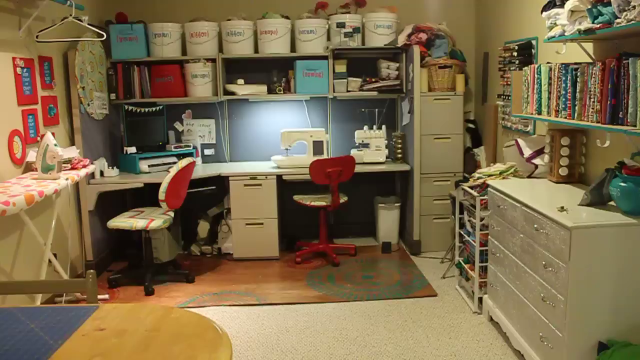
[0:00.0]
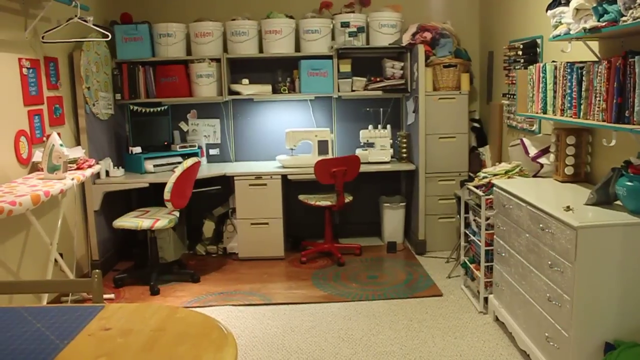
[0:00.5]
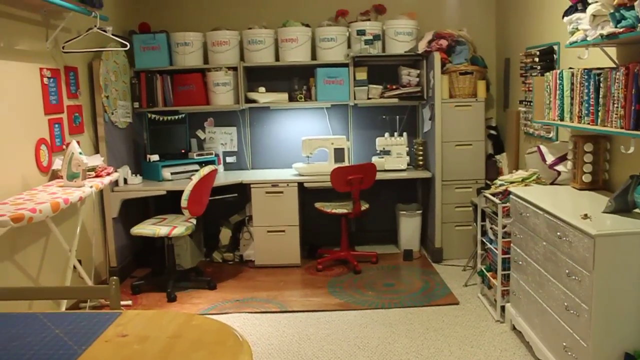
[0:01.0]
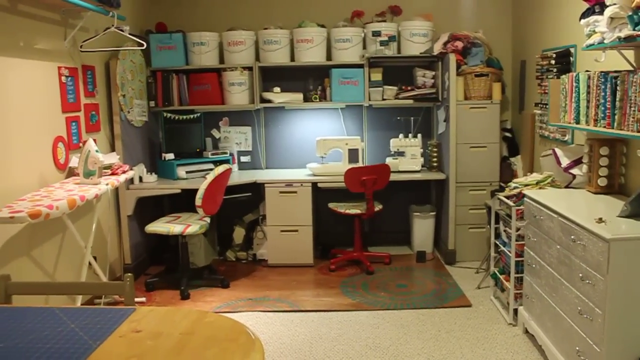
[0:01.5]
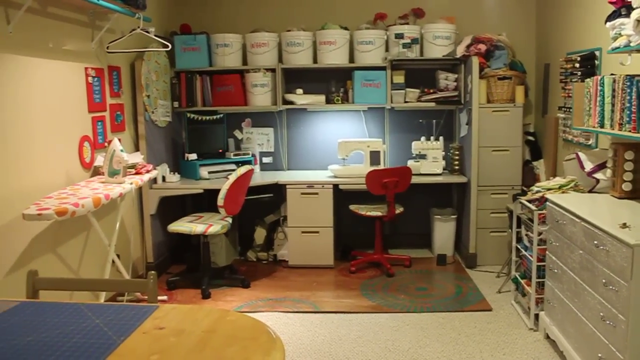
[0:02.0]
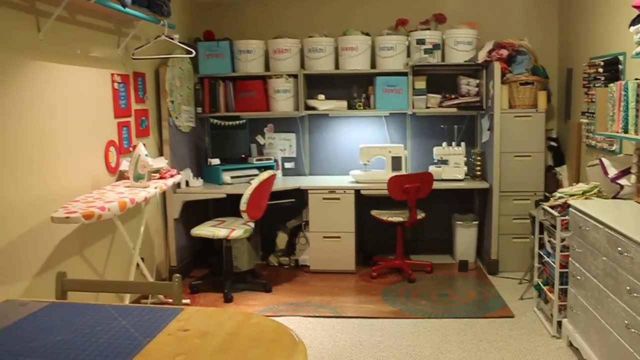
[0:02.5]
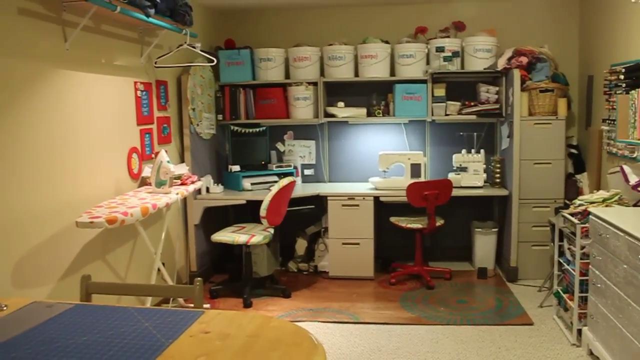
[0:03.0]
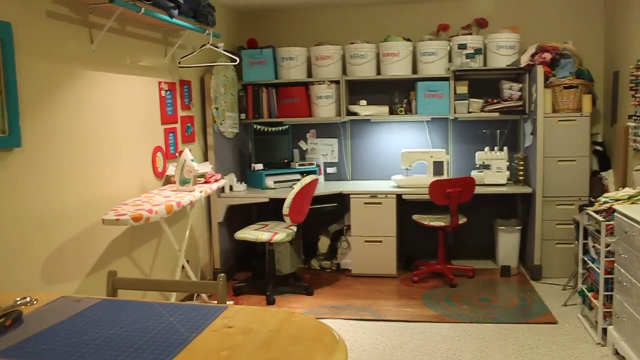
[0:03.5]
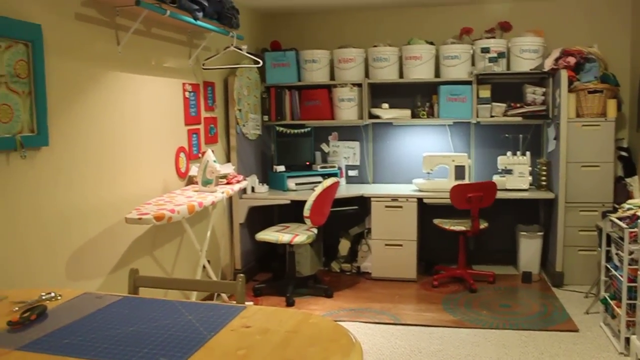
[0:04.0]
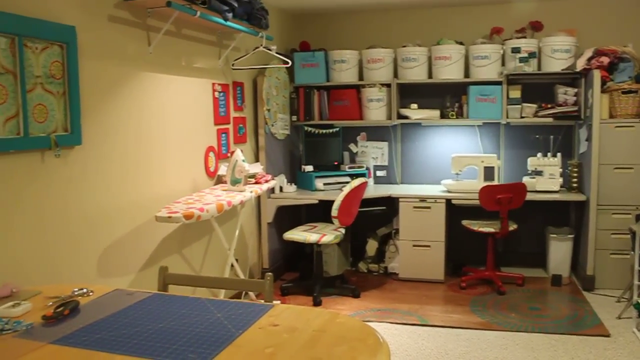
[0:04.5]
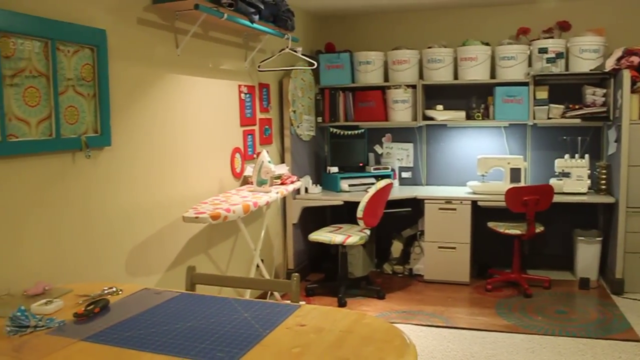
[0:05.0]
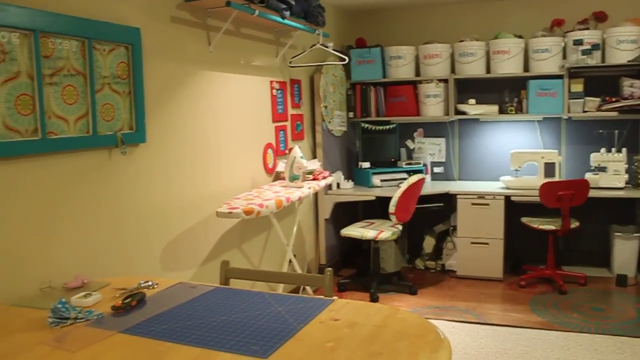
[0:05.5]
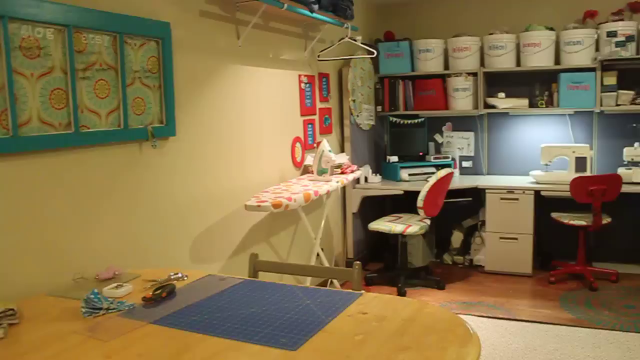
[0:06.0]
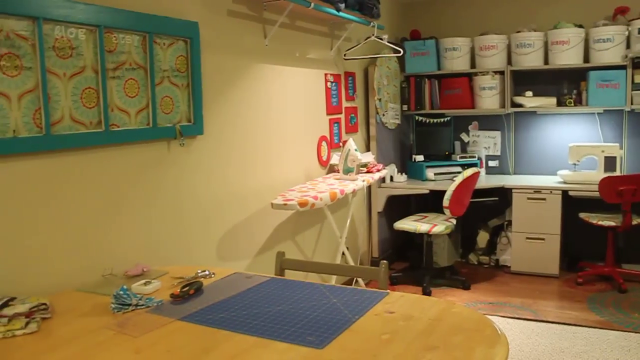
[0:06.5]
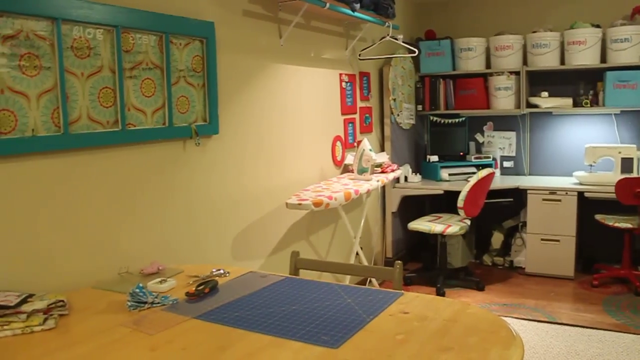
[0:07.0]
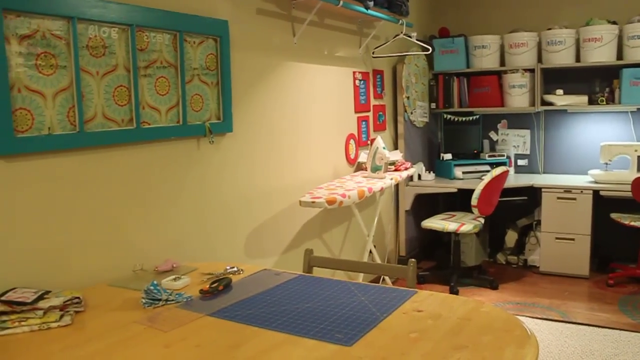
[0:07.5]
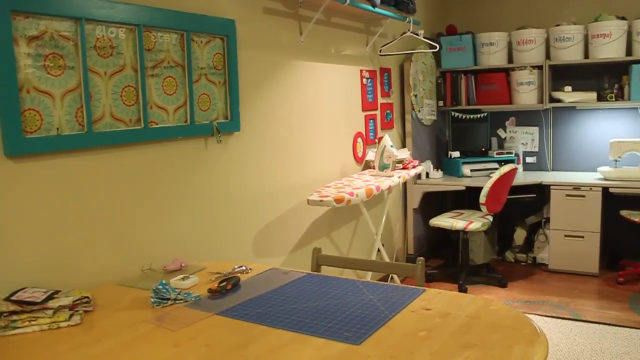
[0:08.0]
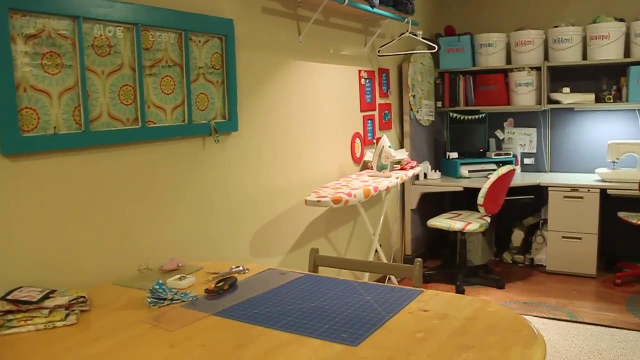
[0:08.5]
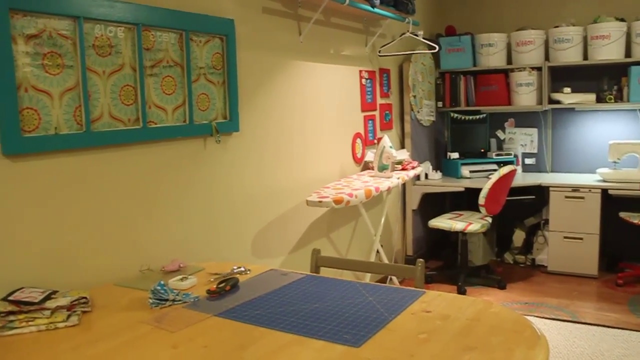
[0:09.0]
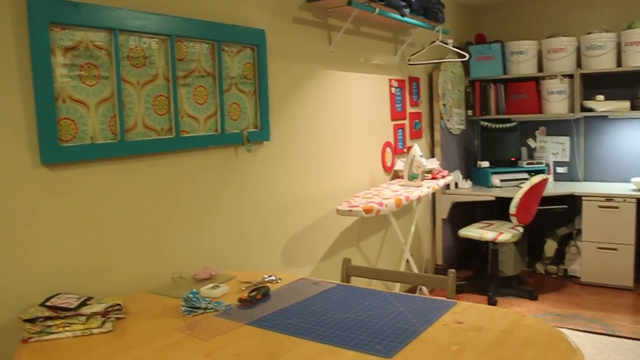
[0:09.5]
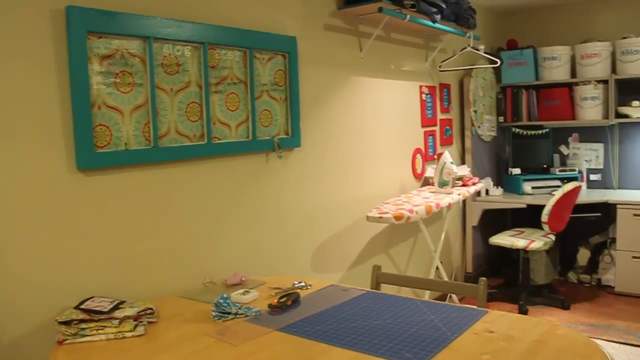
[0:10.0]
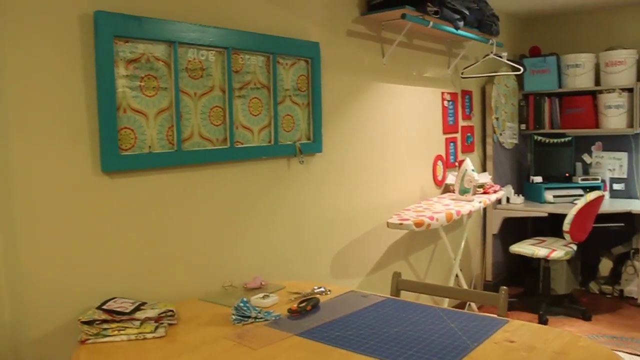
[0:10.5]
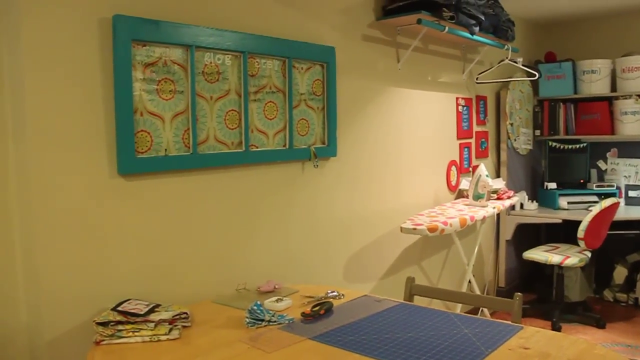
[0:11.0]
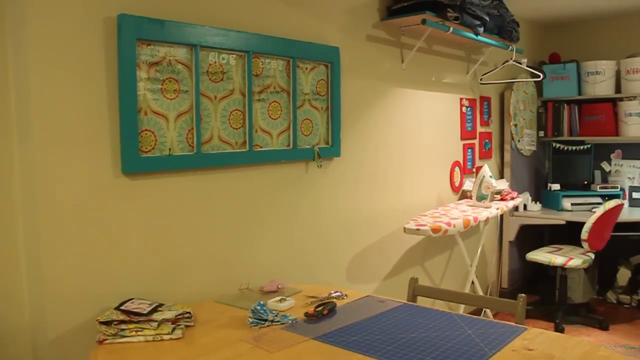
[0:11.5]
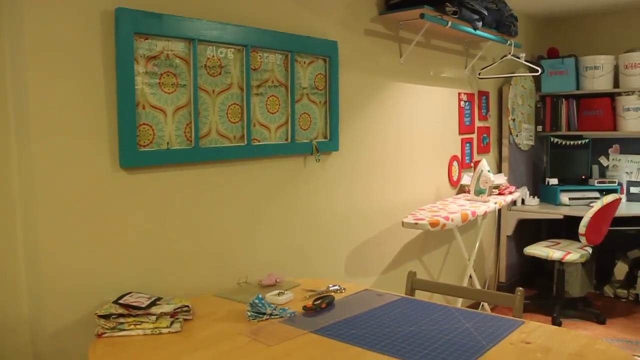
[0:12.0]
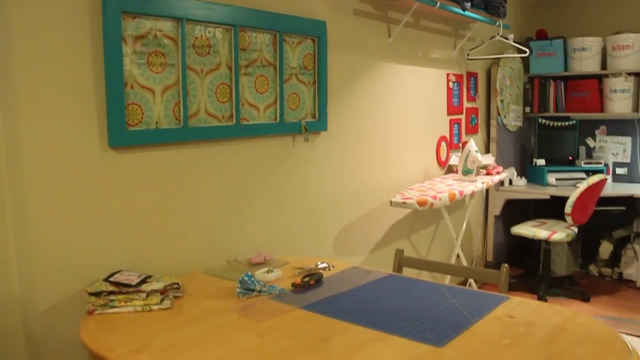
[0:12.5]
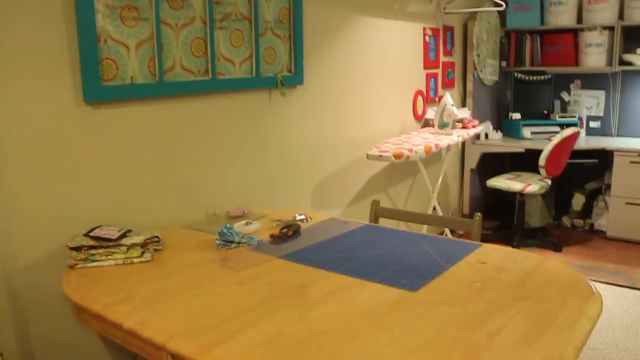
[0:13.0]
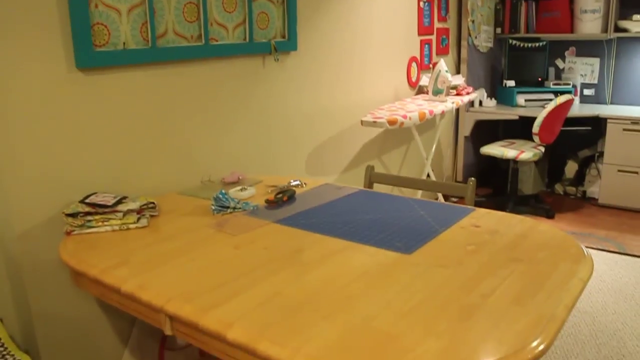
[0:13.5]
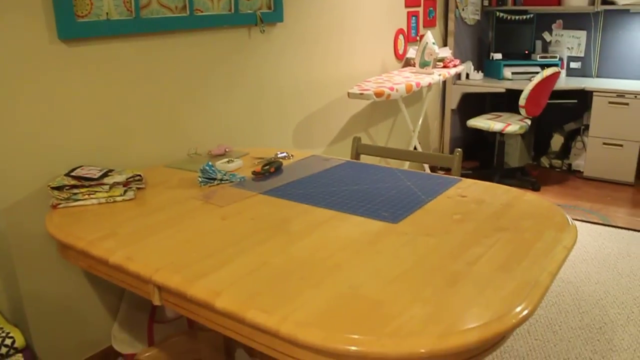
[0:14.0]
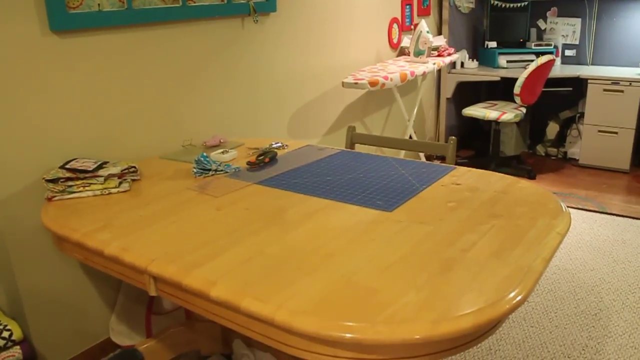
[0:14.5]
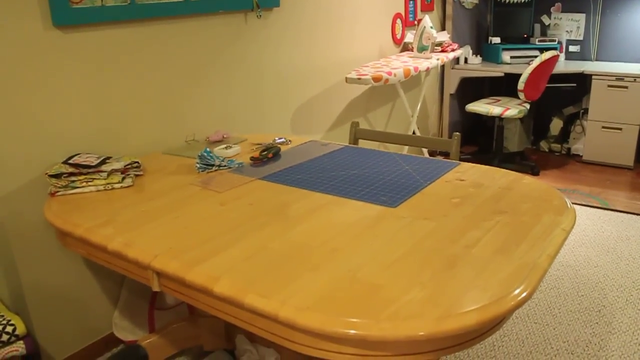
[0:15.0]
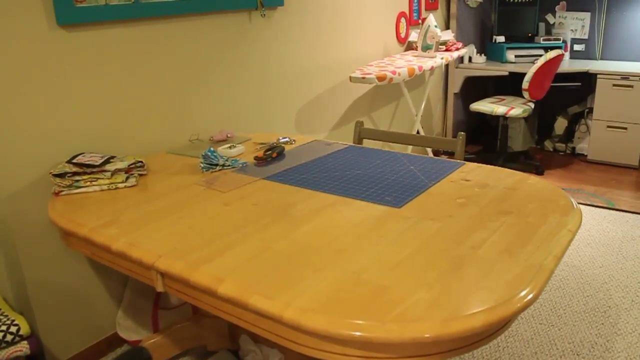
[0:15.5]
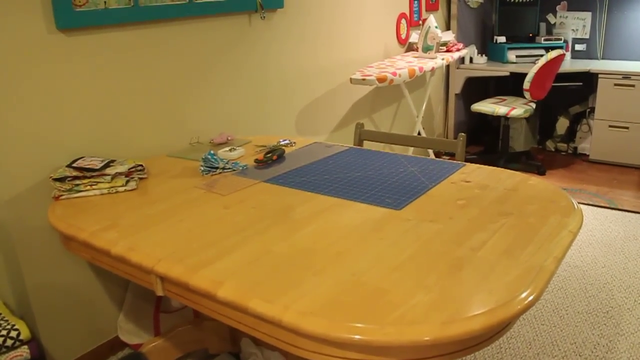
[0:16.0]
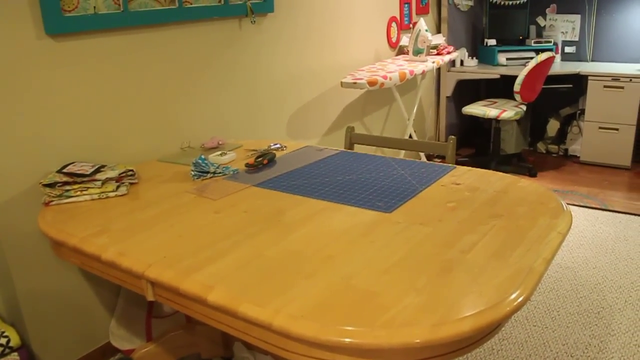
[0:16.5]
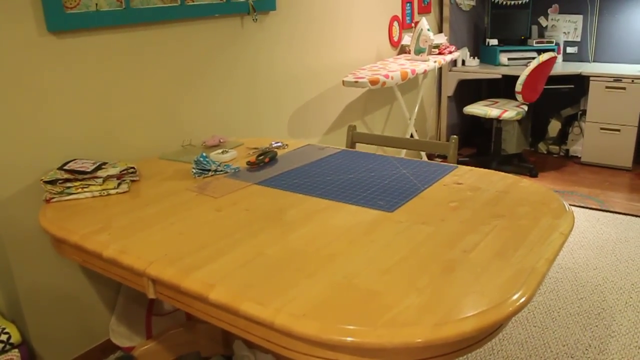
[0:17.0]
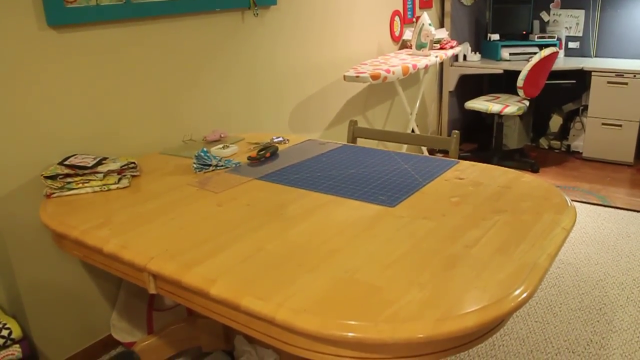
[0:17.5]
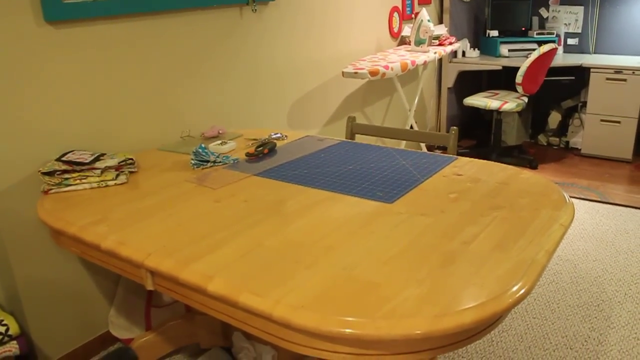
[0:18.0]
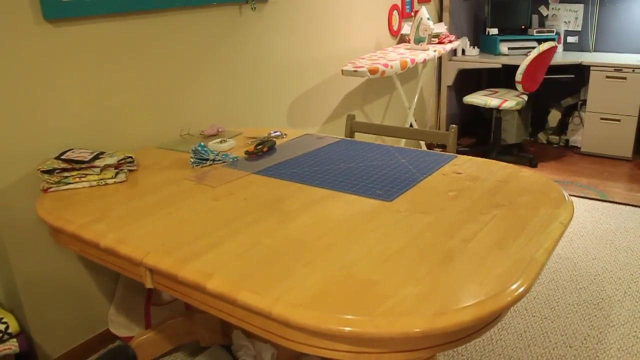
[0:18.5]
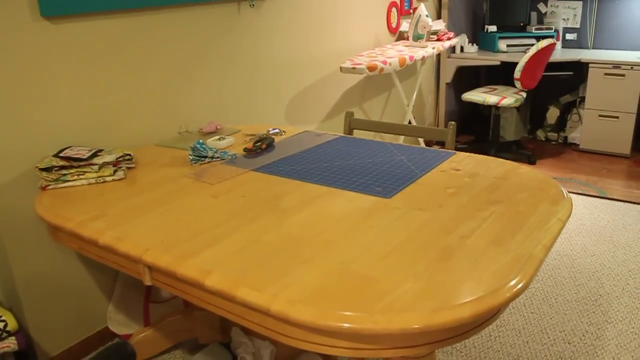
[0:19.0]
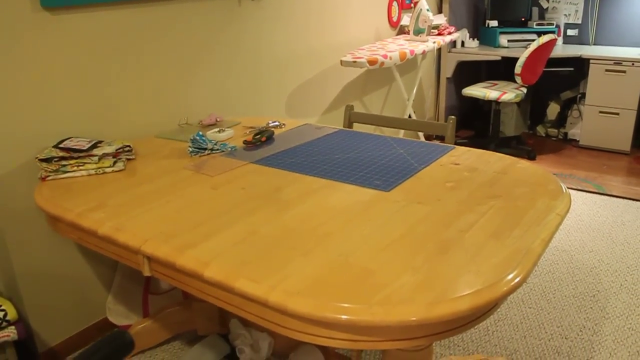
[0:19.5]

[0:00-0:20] A very neatly arranged work area is shown. At the very back of the room is a desk with a knitting machine on top. An ironing board is on the left wall, and a dresser is on the right wall. On top of the dresser there is a shelf holding various scrapbooks. The desk also has various shelves; at the very top there appear to be various buckets, apparently filled with various materials. A light attached to the bottom shelf shines down onto the desk. The camera keeps panning left and right to show off the work area. There is one red chair in front of the desk and another chair on the left side of the desk, which has a red back and a patterned seat that is white and various other colors. The camera then pans slowly to the left side of the room, revealing a table in the foreground and a portrait hanging on the left wall.